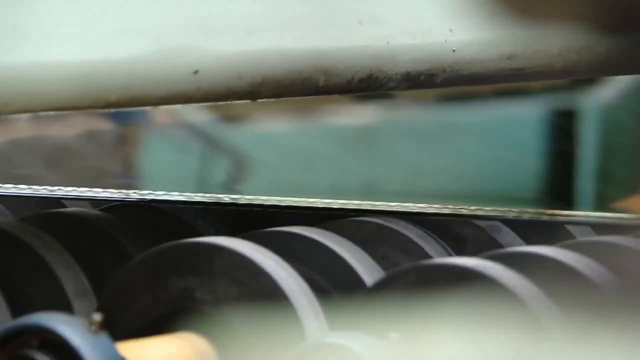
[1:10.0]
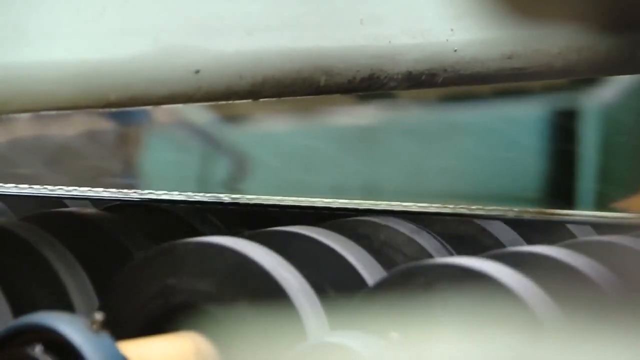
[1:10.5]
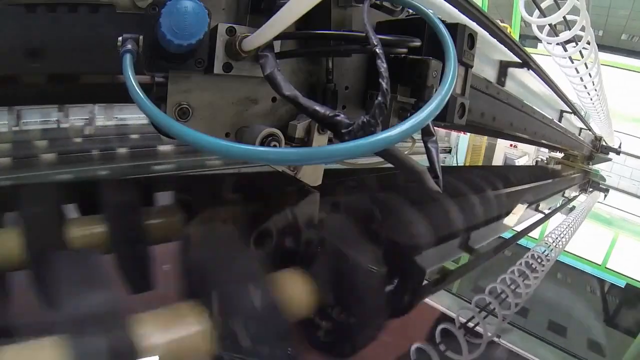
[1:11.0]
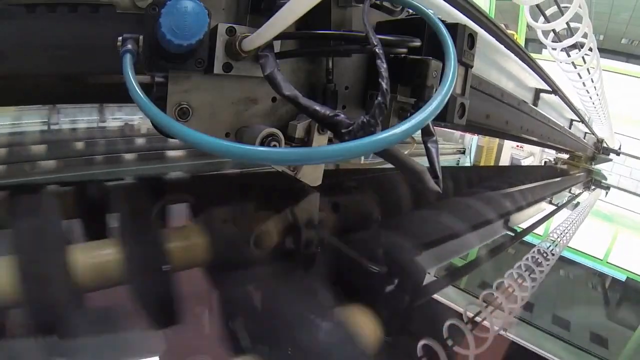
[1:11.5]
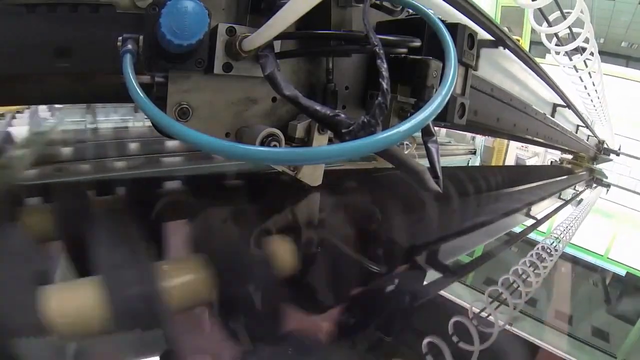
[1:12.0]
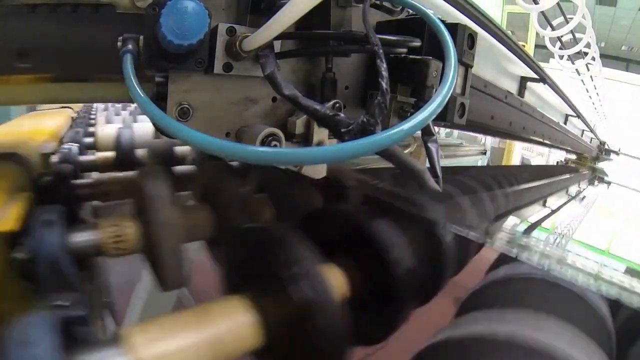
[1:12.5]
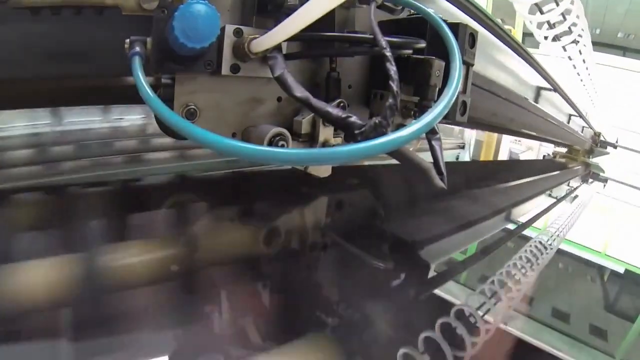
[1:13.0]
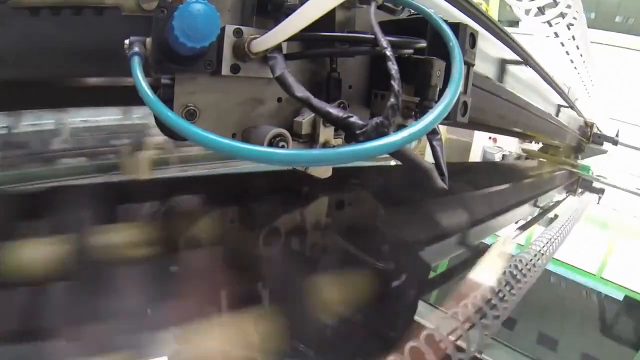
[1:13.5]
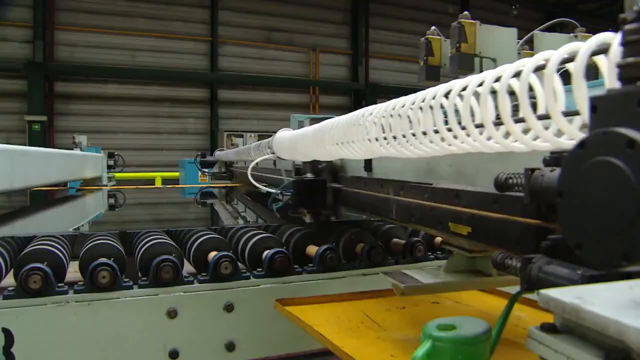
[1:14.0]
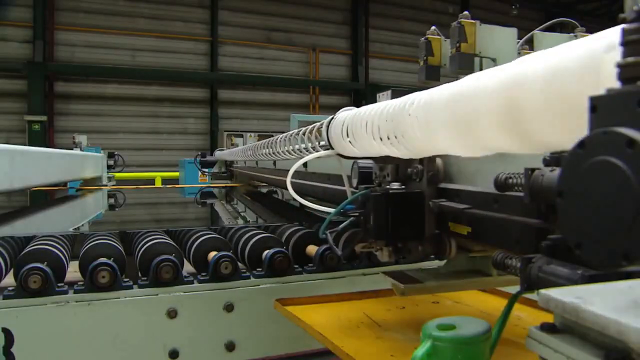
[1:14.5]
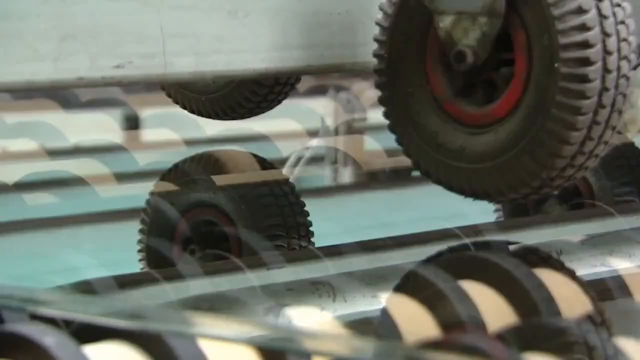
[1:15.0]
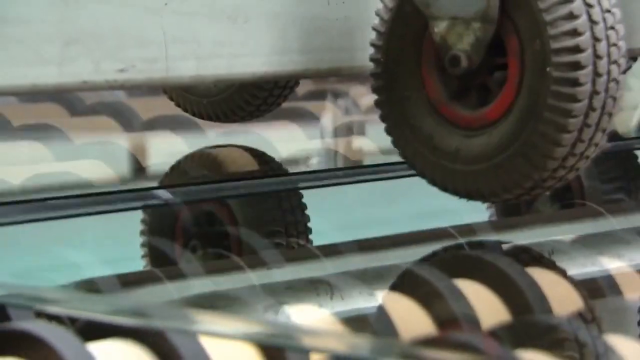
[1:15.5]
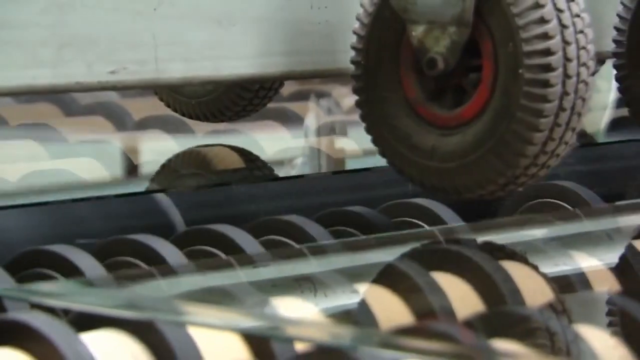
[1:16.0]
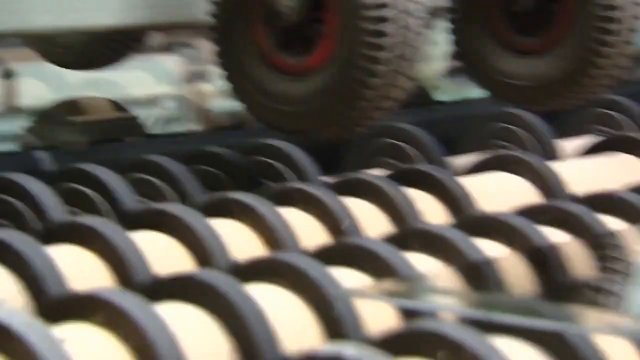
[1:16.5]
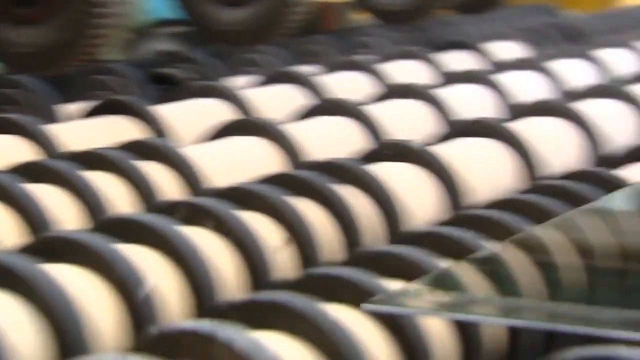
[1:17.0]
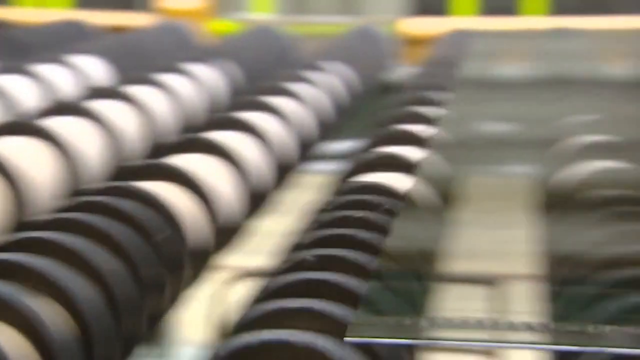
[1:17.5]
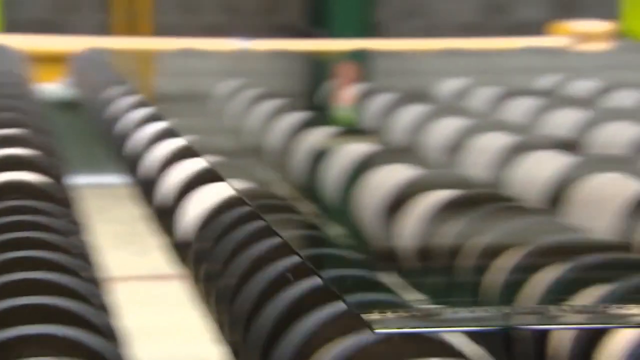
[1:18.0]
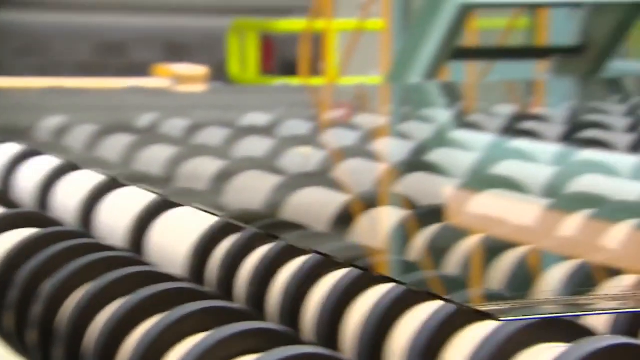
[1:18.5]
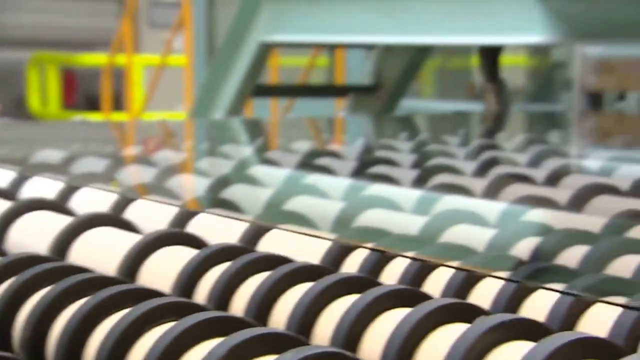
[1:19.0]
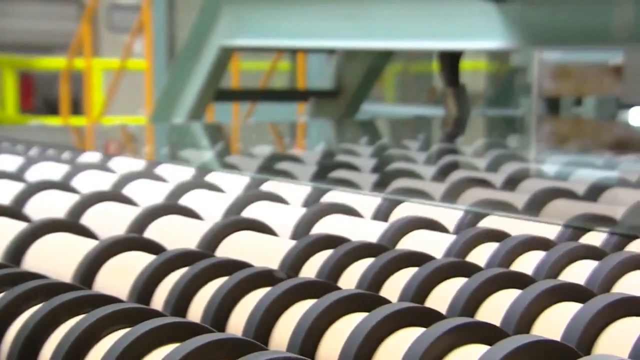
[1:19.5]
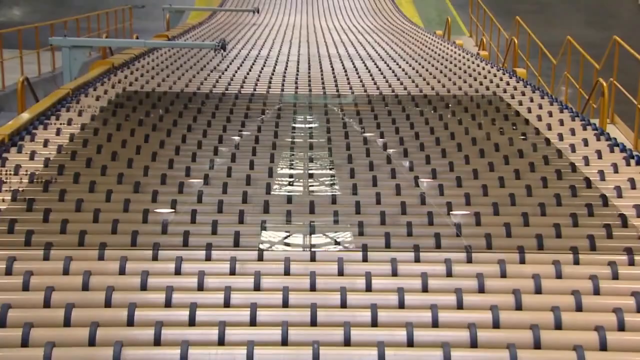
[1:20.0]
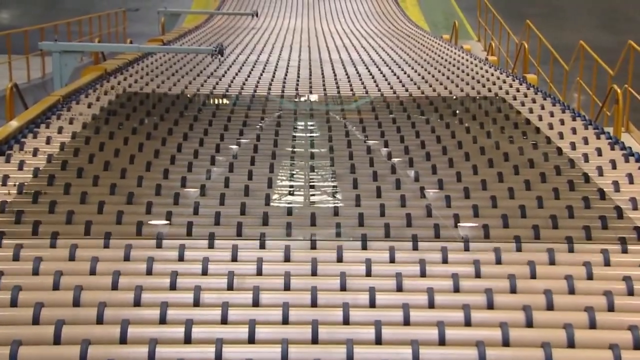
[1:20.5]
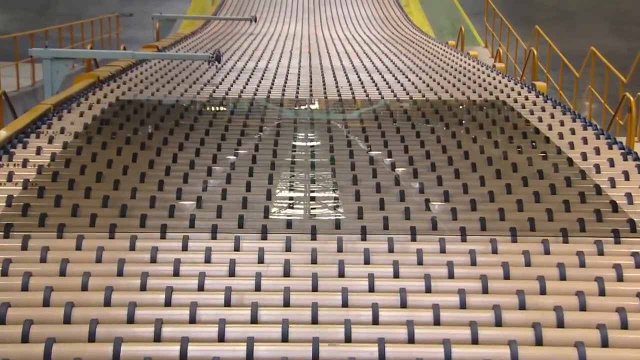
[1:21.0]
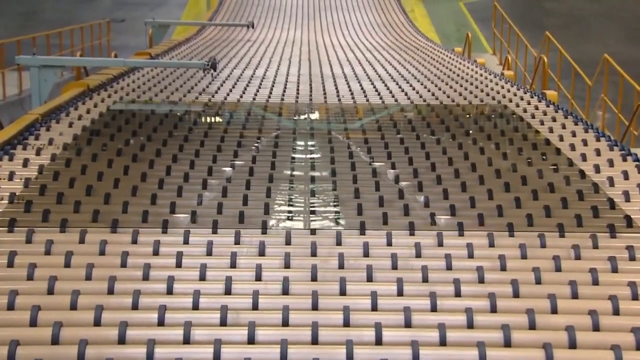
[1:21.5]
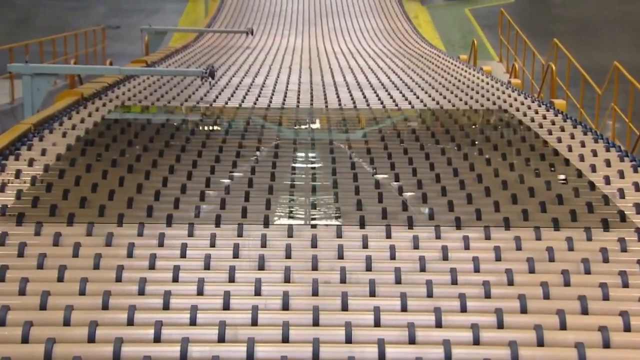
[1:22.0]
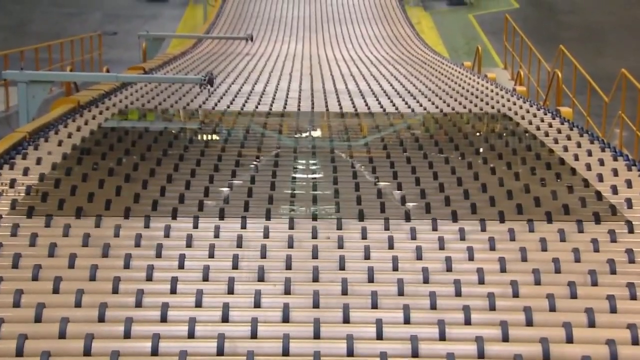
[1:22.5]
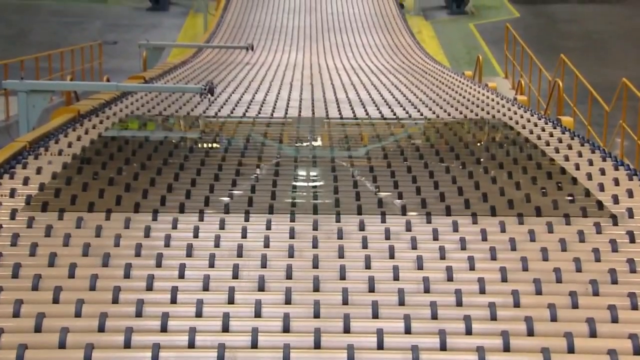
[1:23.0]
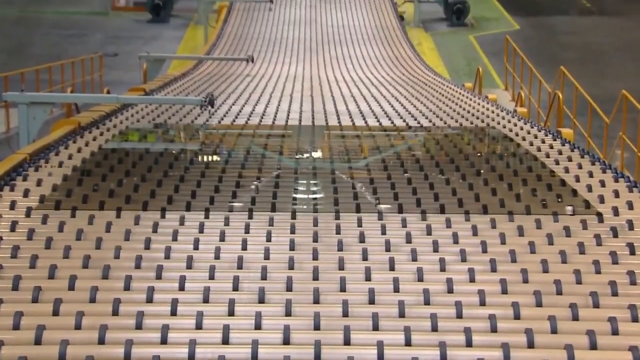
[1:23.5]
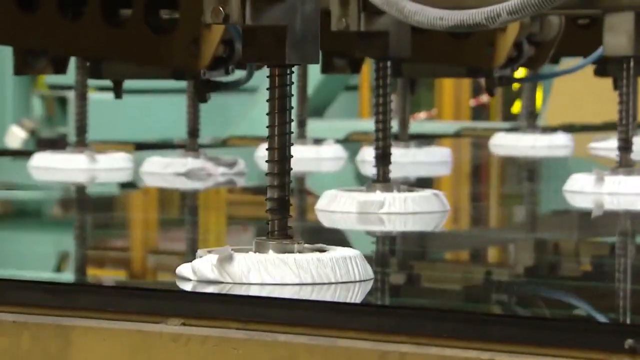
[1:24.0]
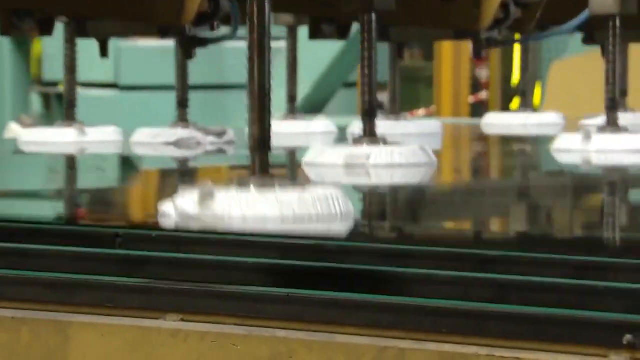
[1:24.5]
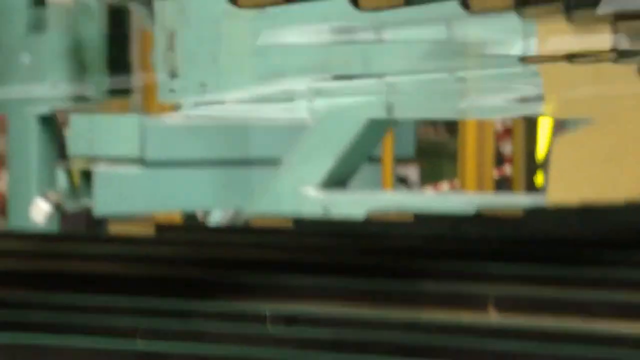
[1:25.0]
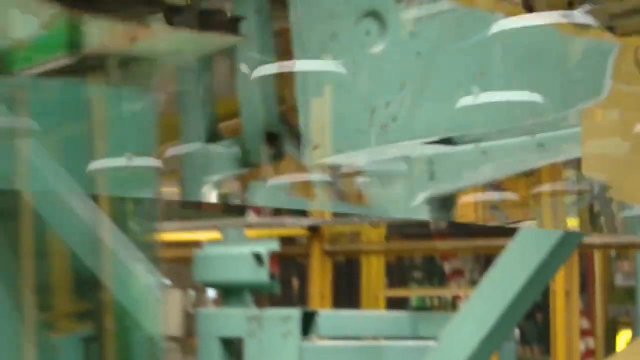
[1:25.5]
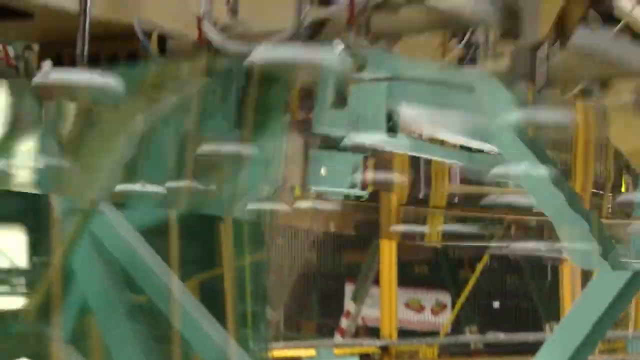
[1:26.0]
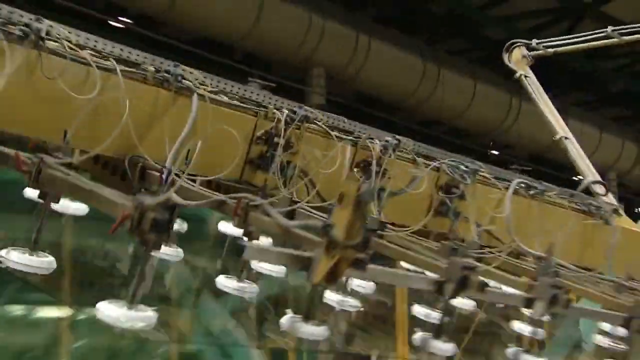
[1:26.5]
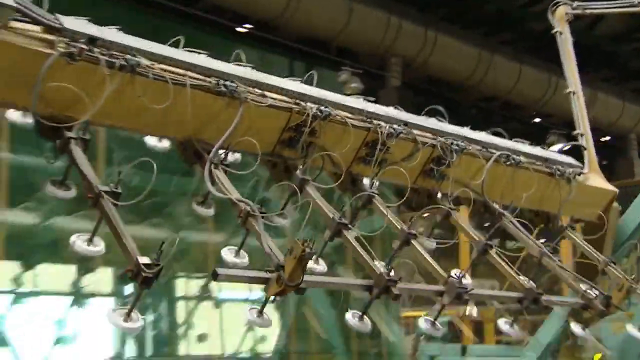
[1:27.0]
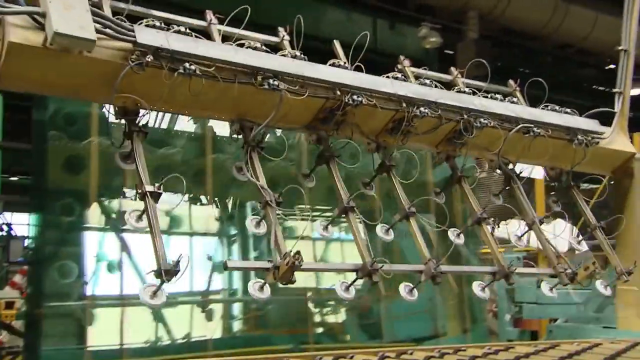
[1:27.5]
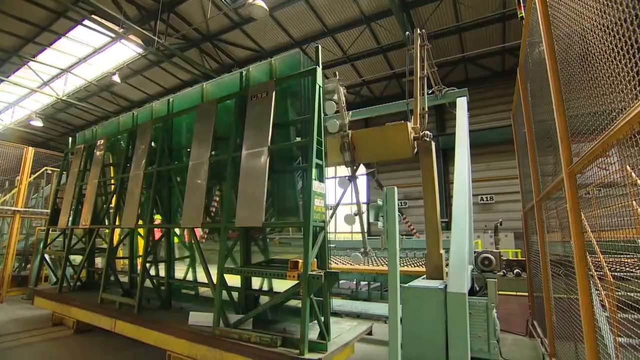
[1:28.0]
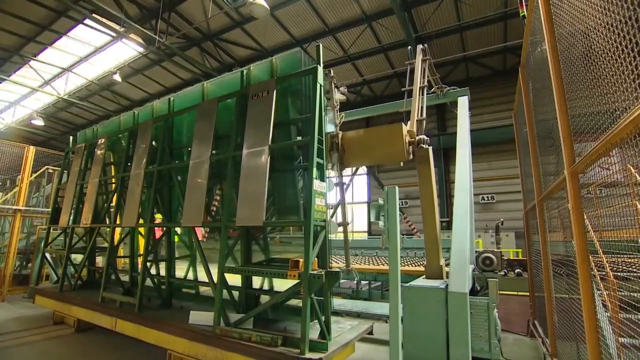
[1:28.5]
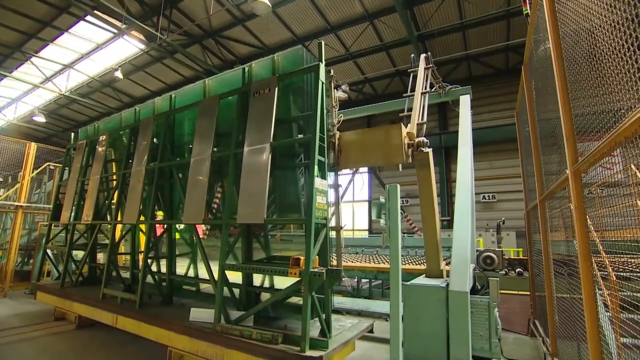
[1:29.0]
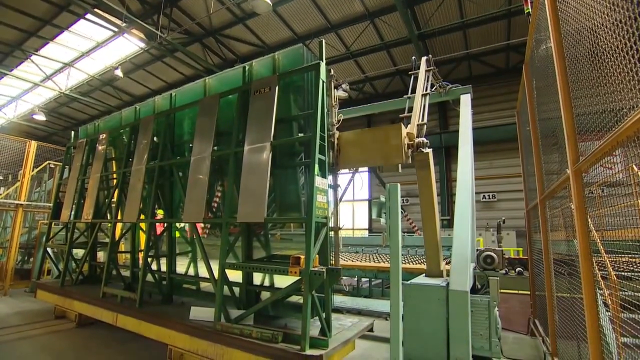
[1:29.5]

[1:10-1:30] Circular metal rollers roll the metal sheets above. The video transitions to another piece of machinery hovering over the sheets, which are now transparent, as the metal rollers roll them through the machine; it is very wide and very large. Further along, machinery suctions and picks up the glass sheets and stacks them for transportation, with very large pieces of equipment and glass being moved. The circular metal machinery quickly moves the glass across the line to be adjusted by each piece of machinery: the first moves it along, levels it and shines it, and then it is moved along the long line to be suctioned and moved across the factory.